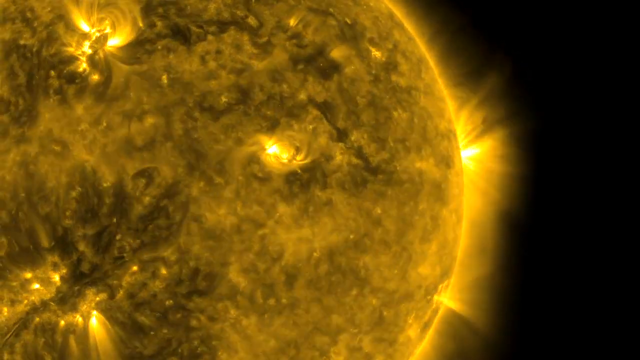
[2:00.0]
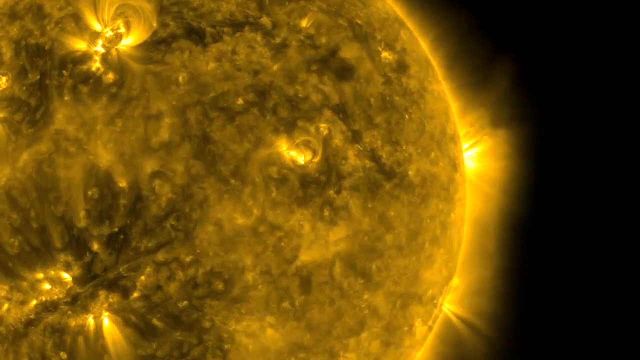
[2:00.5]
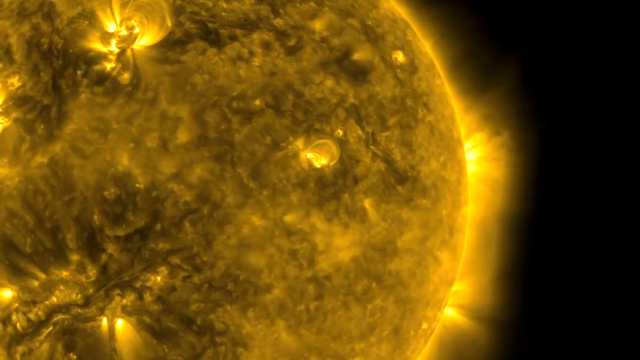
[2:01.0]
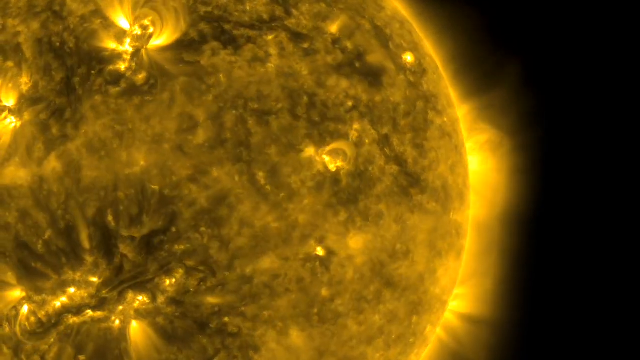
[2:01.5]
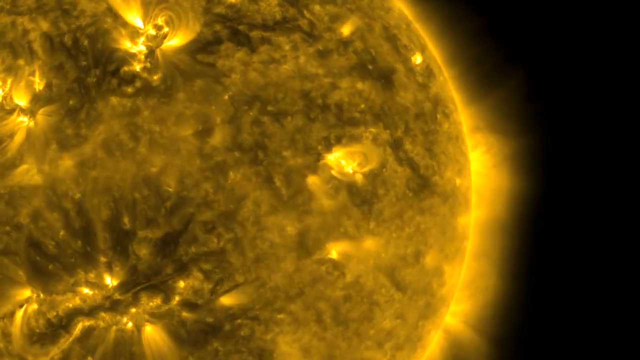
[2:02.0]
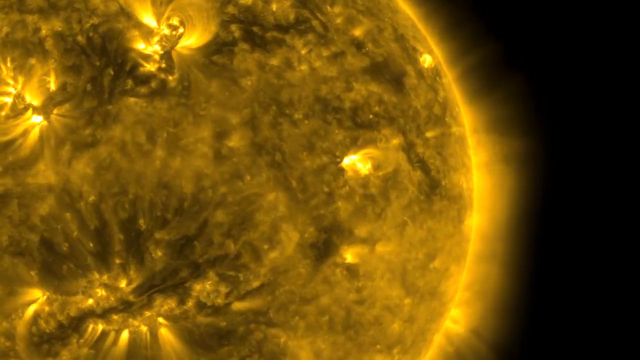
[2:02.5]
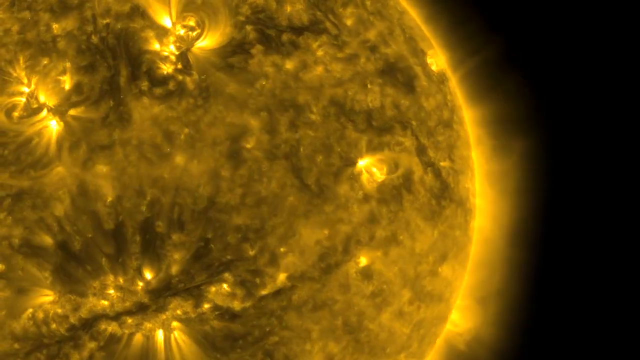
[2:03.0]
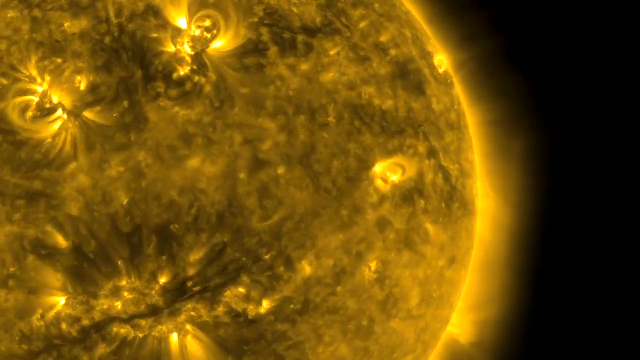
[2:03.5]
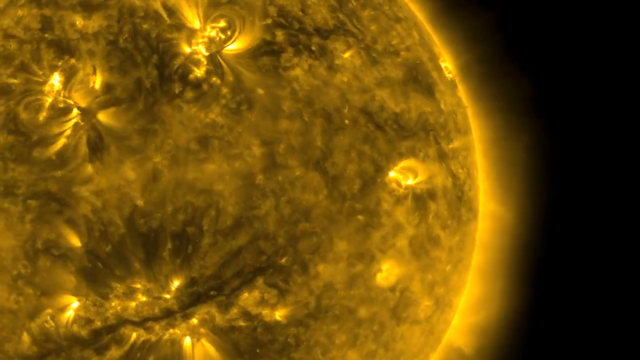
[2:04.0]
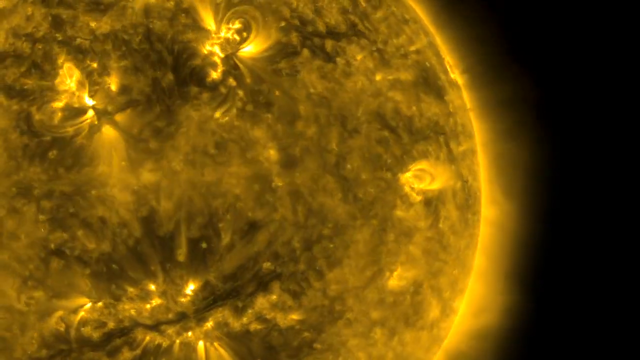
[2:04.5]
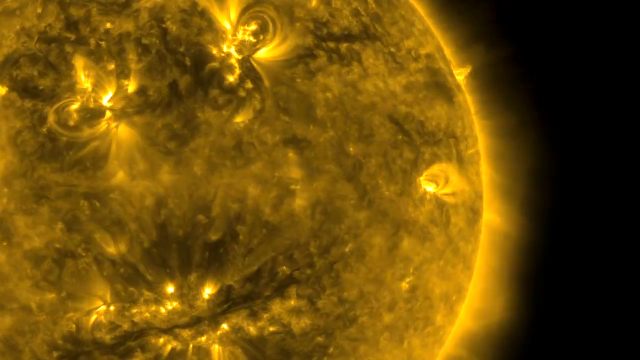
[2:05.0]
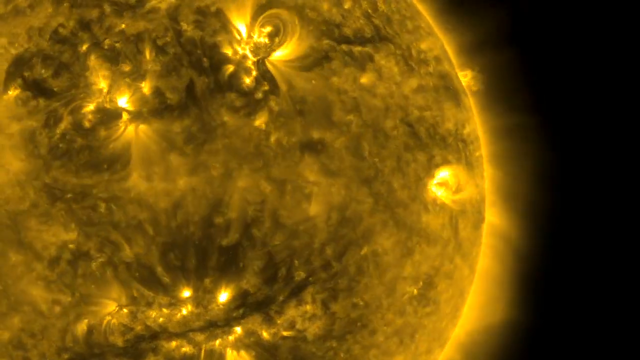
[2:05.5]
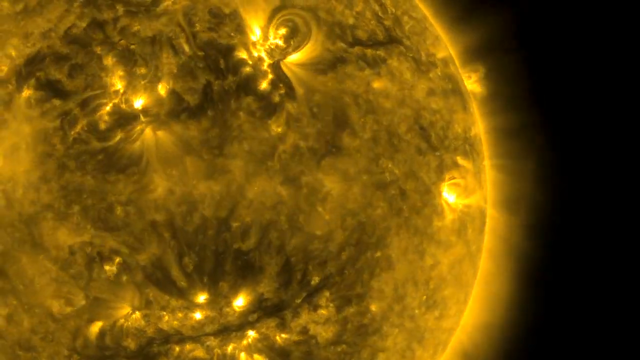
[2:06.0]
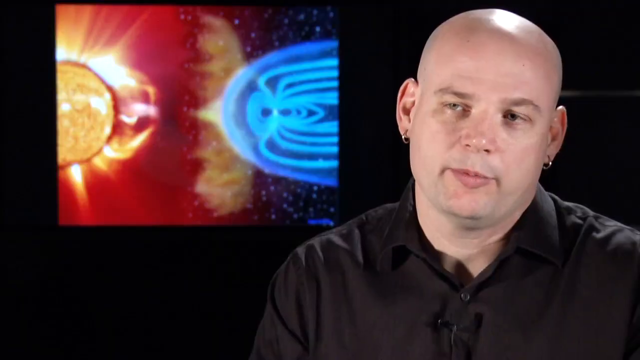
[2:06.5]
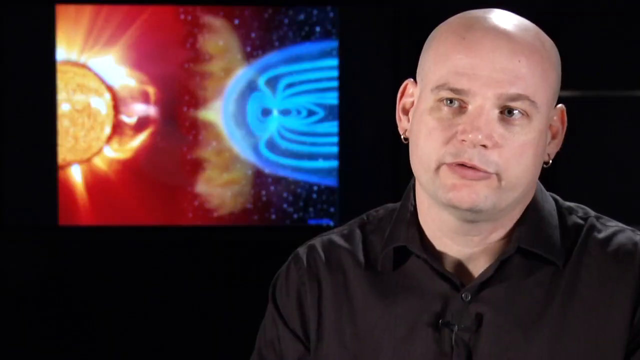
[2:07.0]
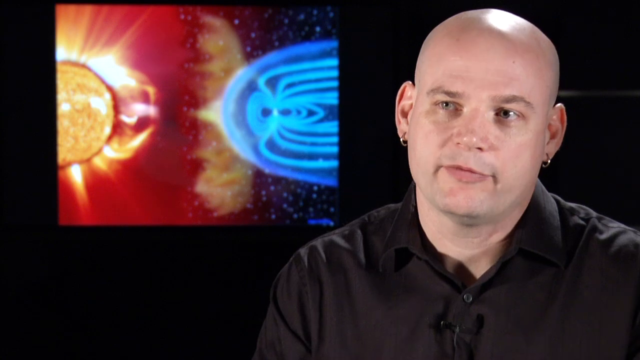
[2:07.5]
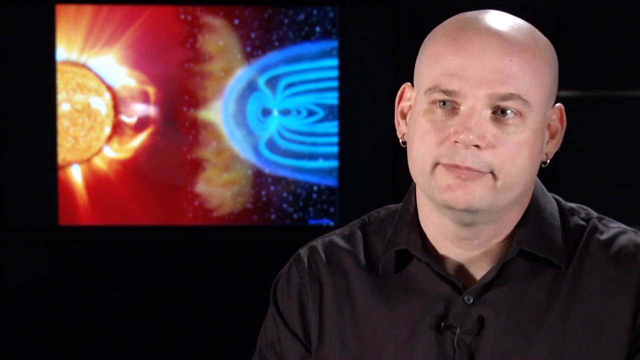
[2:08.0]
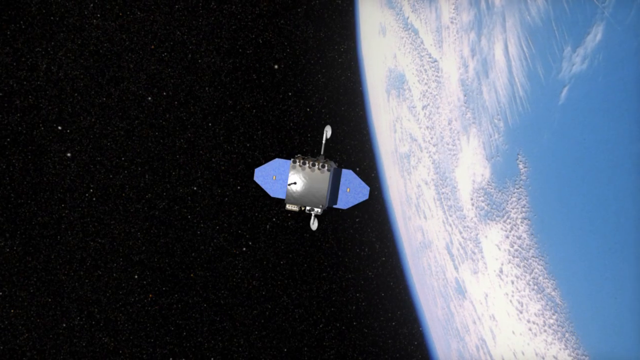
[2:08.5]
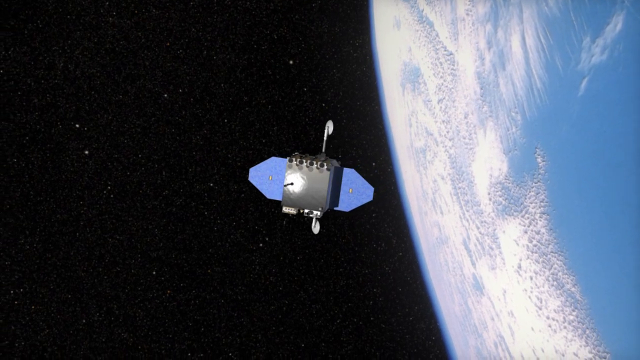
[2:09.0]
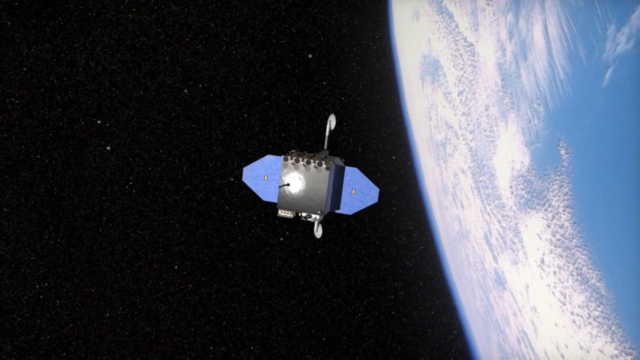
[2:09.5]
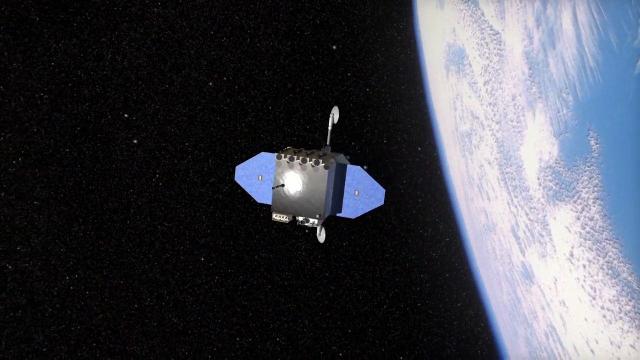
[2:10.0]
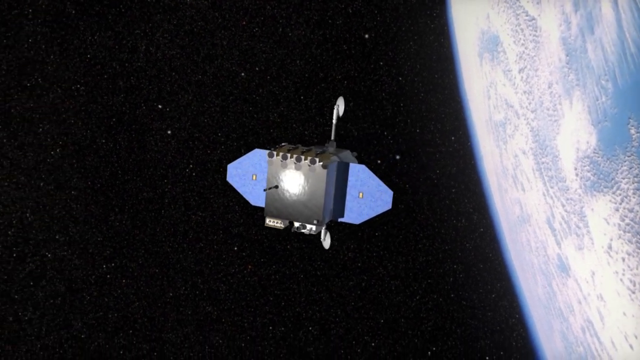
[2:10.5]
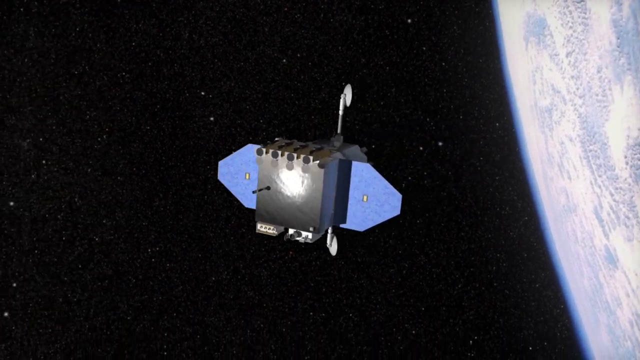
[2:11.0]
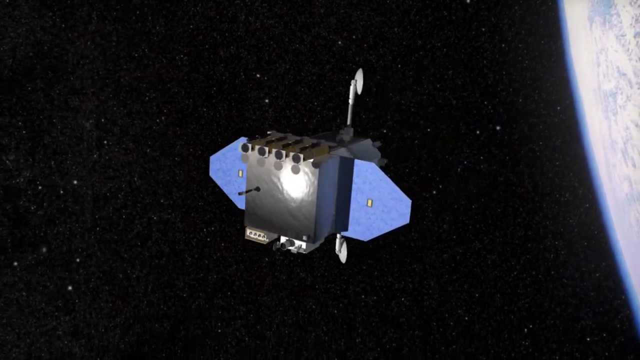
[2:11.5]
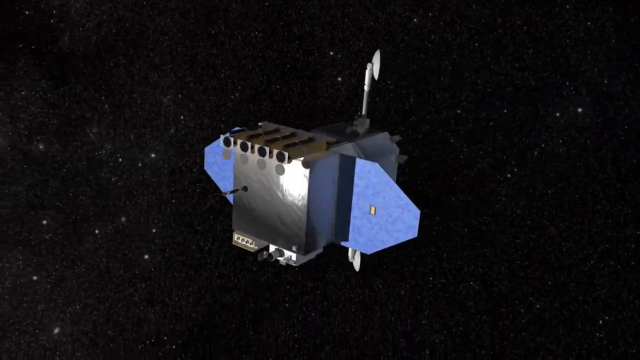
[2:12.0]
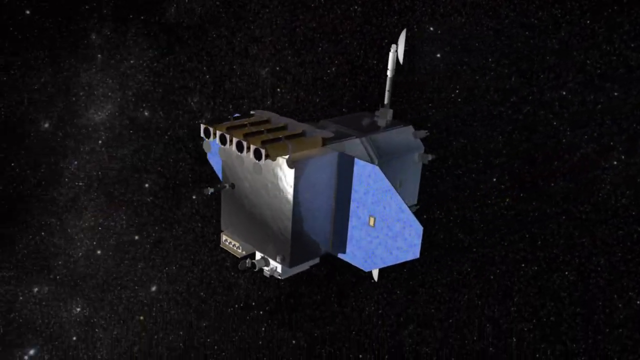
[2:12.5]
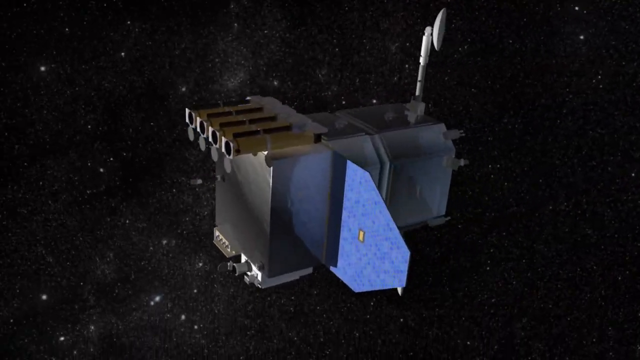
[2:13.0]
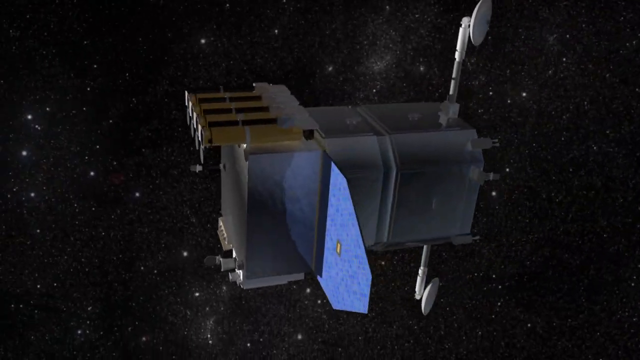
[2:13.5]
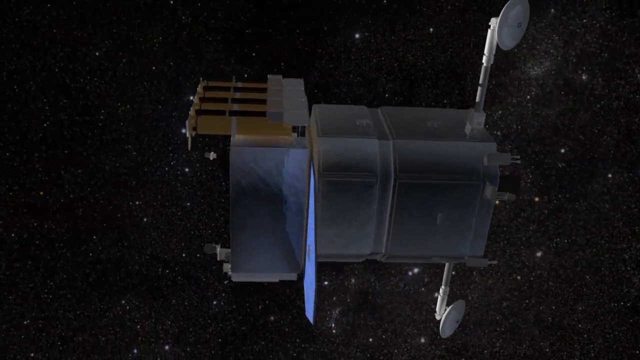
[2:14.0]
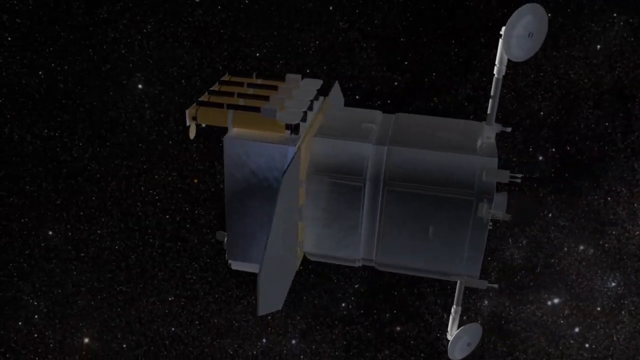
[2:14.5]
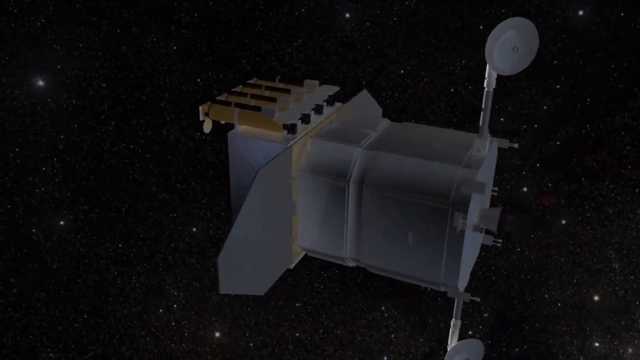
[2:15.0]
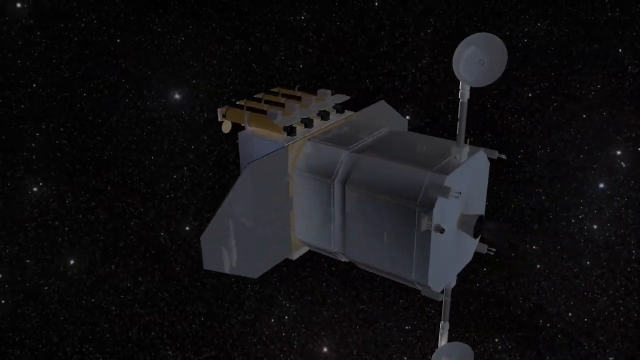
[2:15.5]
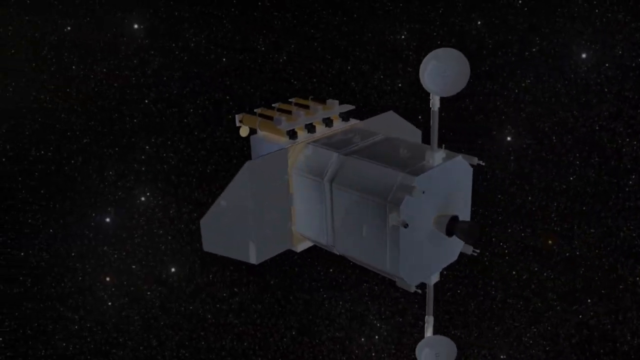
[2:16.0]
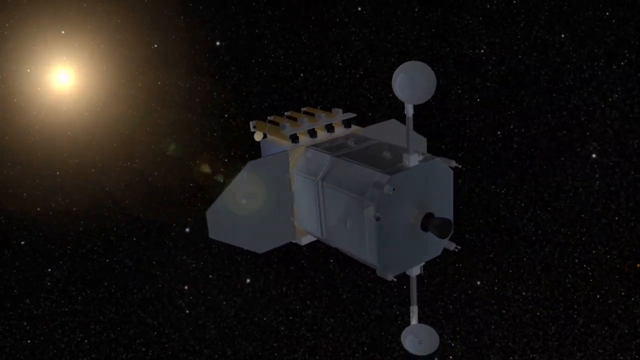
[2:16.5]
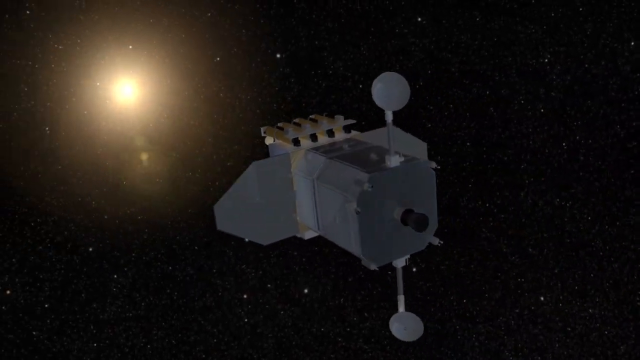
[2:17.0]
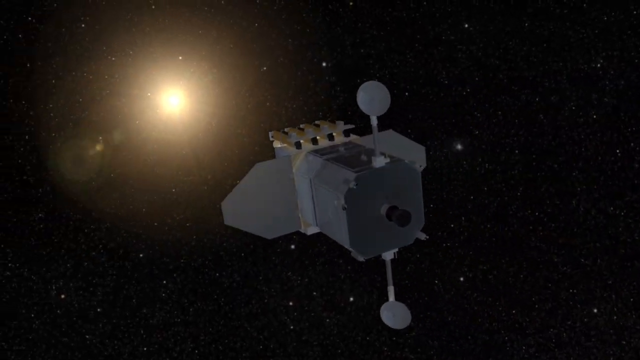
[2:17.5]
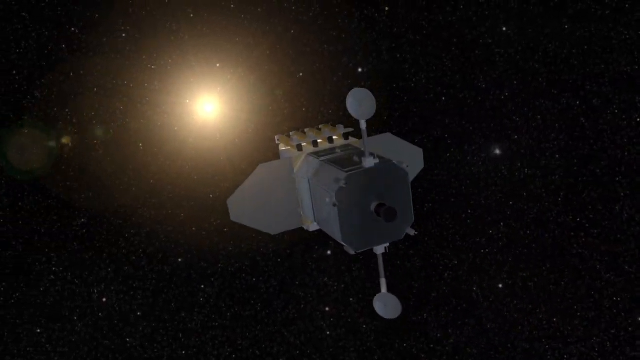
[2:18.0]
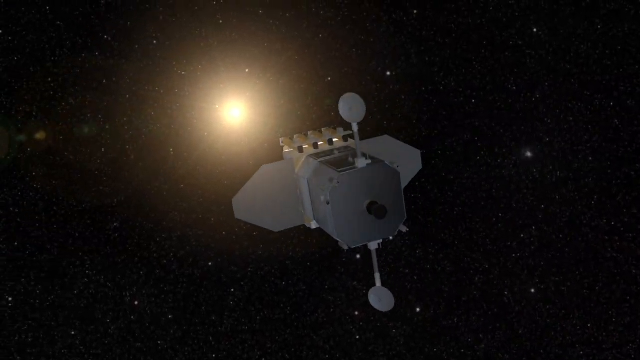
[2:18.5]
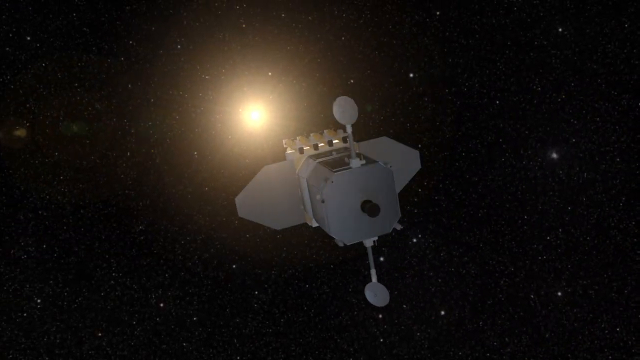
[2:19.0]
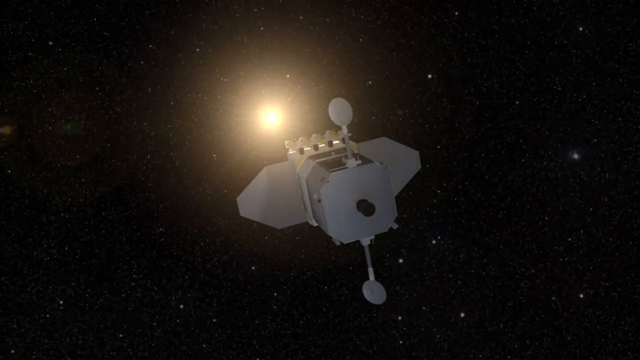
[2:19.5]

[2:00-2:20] The very large sun rotates on the left side while solar flares erupt on its surface. The scene changes to the man talking on the right side, then to a satellite floating in space on the left side with the Earth to the right. The satellite has kind of a box-shaped design, almost like a rectangle, and it continues floating through space toward the sun. The camera view shifts to the left, showing the sun in the top left corner, very bright yellow, as the satellite travels toward it. The scene then changes to the same man talking.